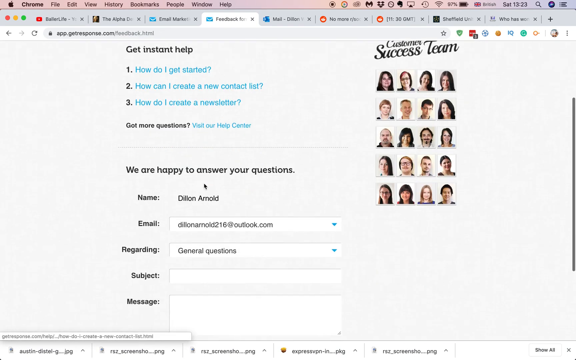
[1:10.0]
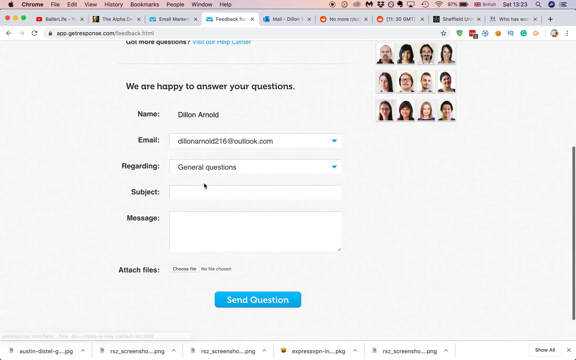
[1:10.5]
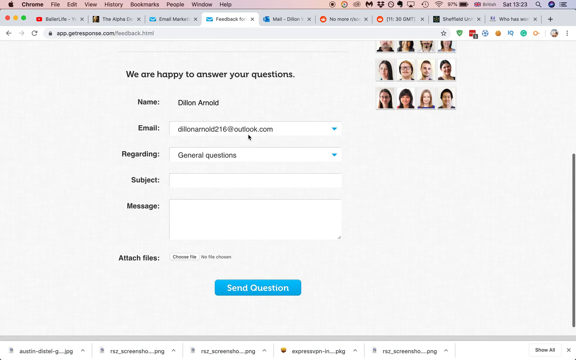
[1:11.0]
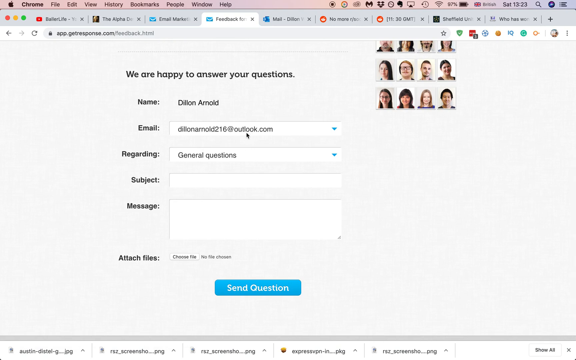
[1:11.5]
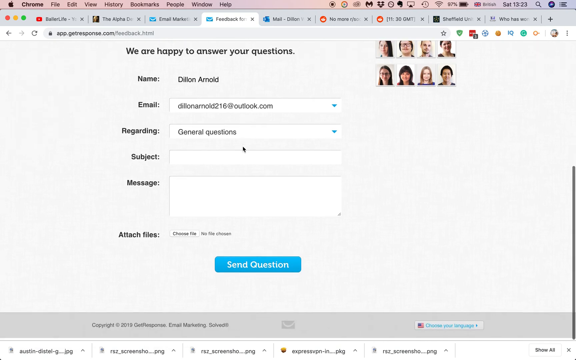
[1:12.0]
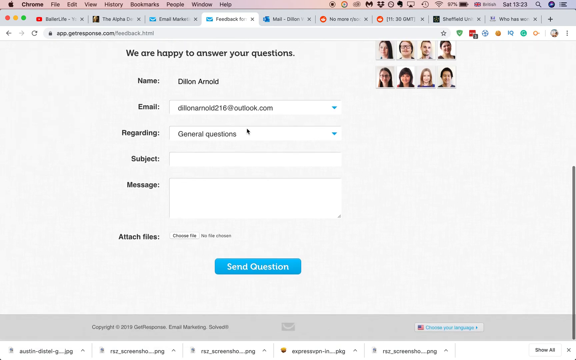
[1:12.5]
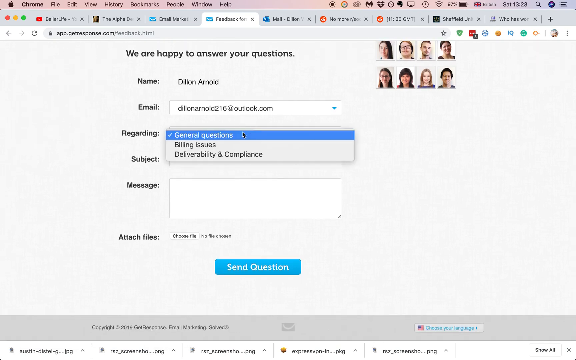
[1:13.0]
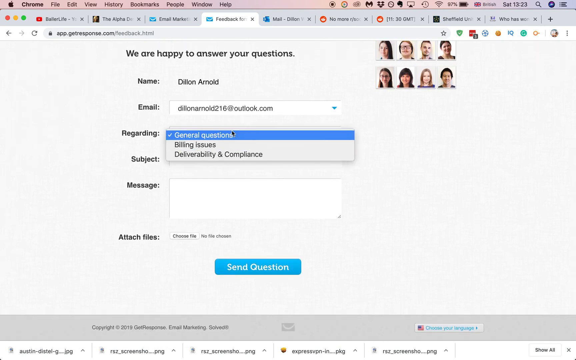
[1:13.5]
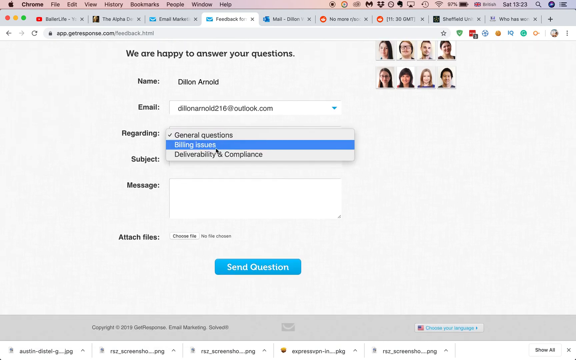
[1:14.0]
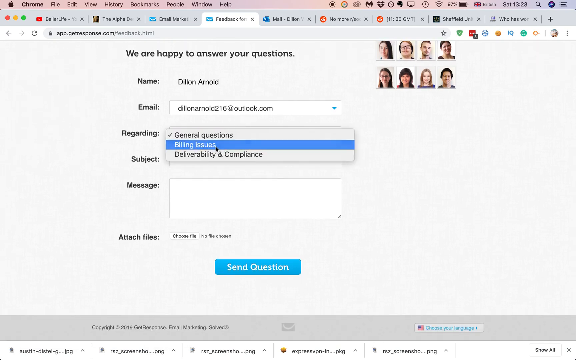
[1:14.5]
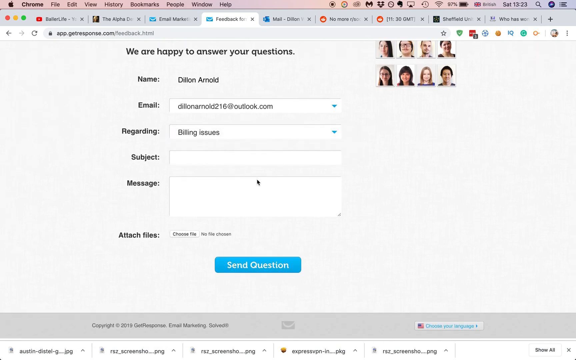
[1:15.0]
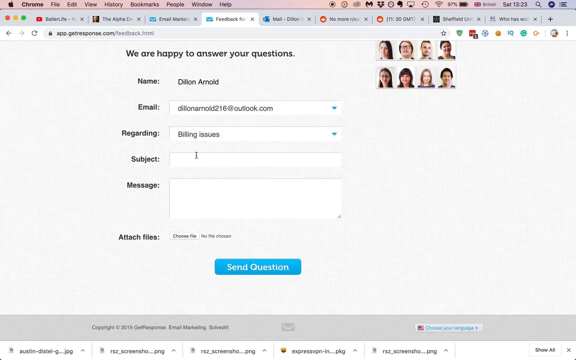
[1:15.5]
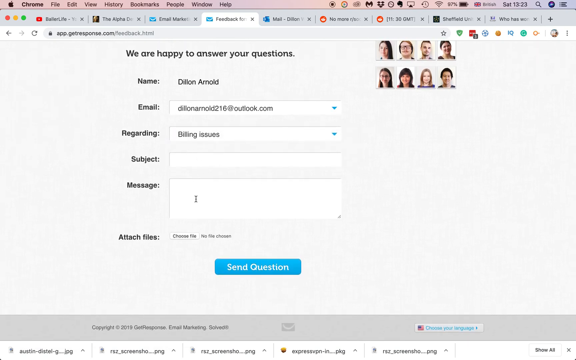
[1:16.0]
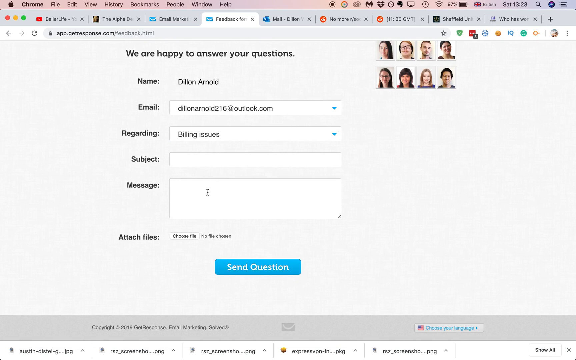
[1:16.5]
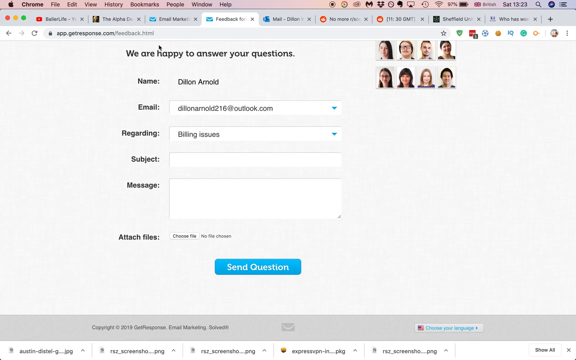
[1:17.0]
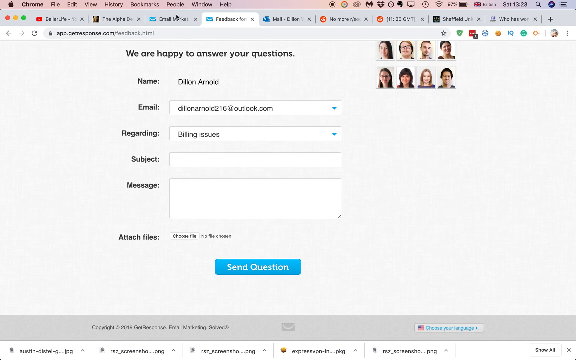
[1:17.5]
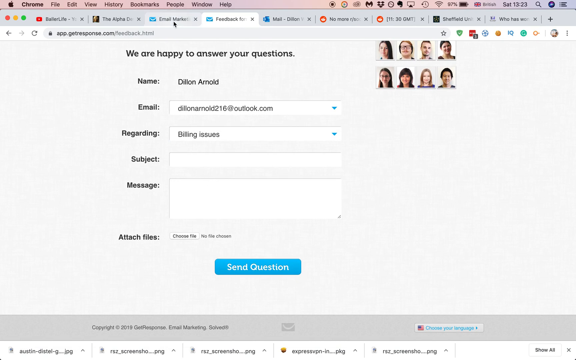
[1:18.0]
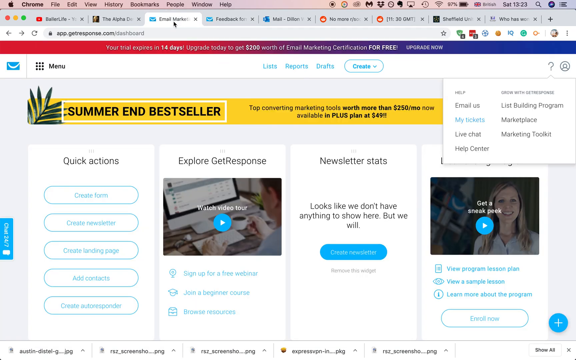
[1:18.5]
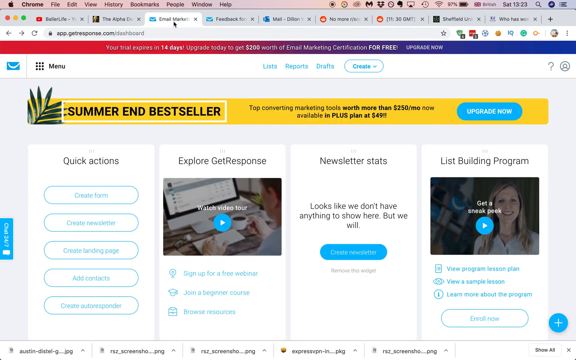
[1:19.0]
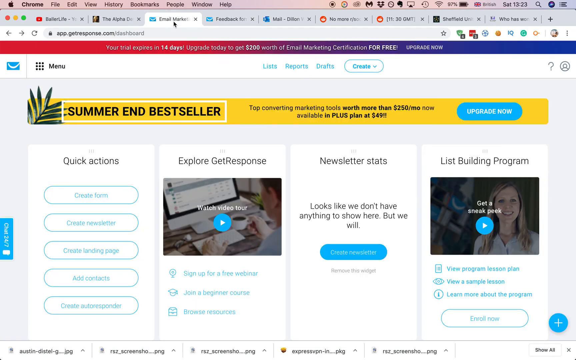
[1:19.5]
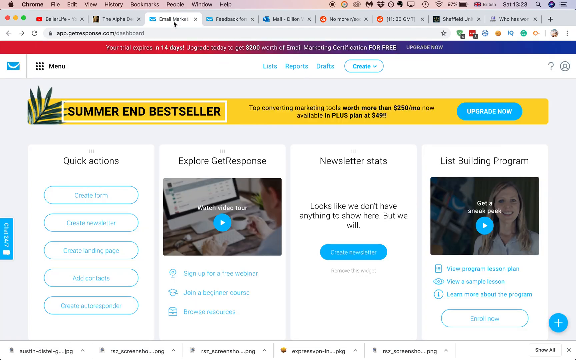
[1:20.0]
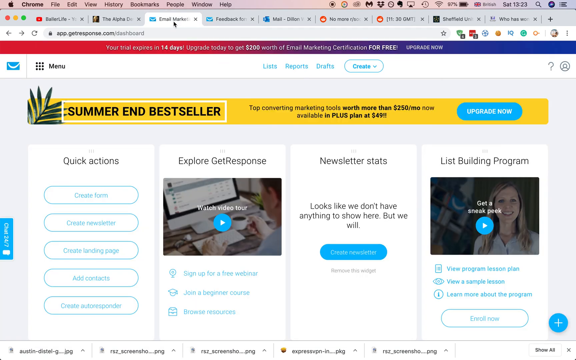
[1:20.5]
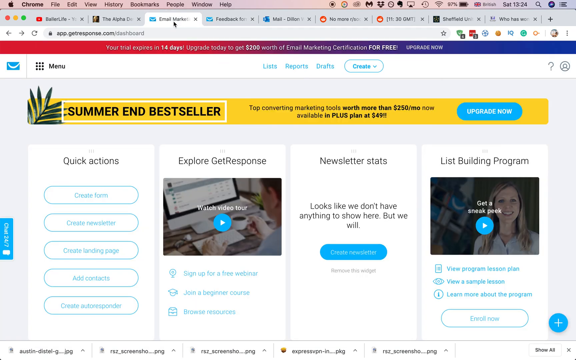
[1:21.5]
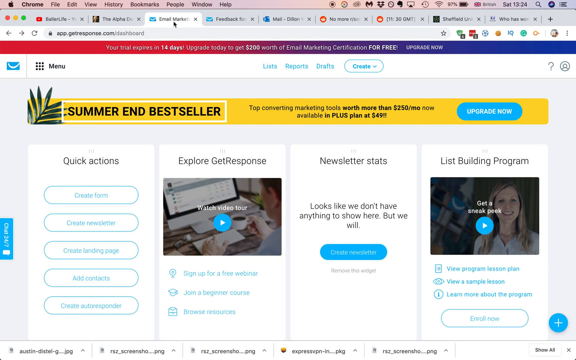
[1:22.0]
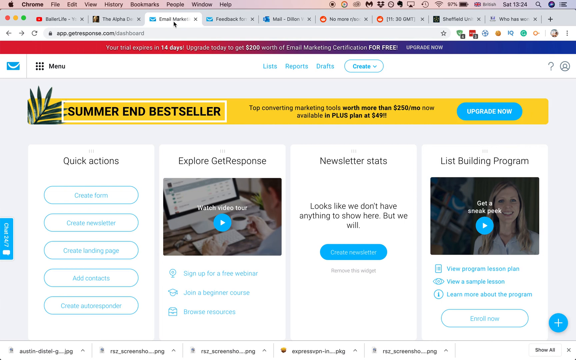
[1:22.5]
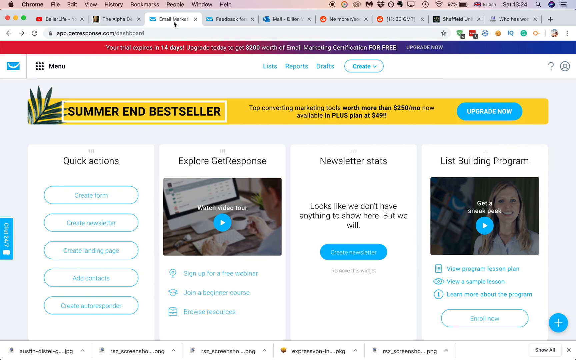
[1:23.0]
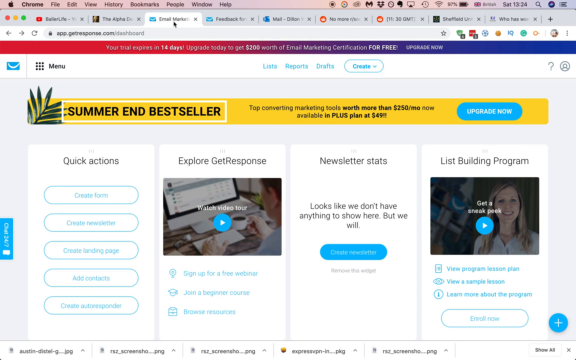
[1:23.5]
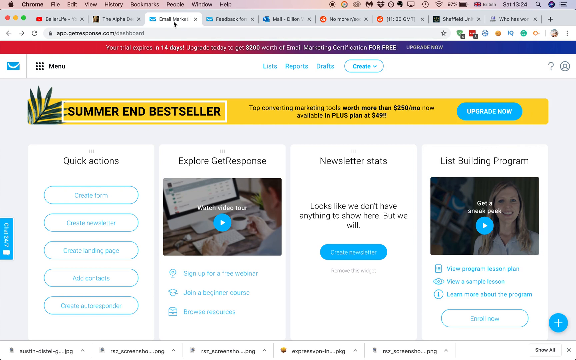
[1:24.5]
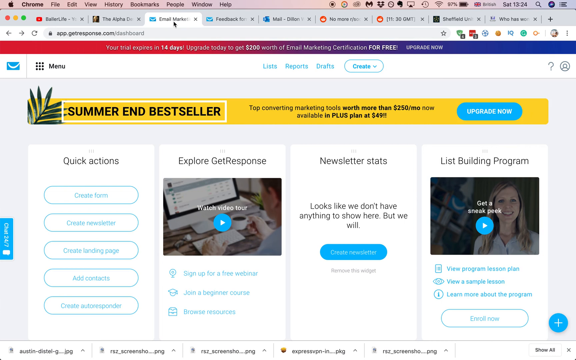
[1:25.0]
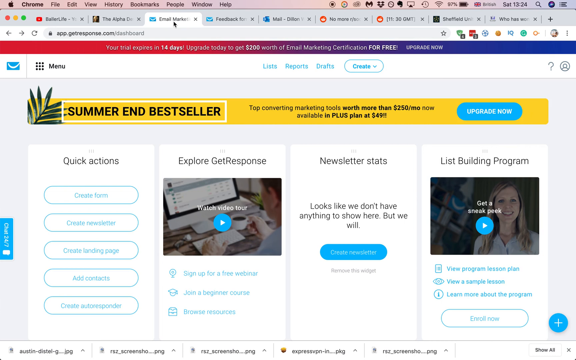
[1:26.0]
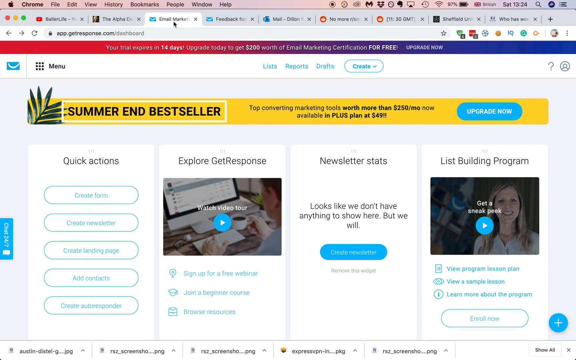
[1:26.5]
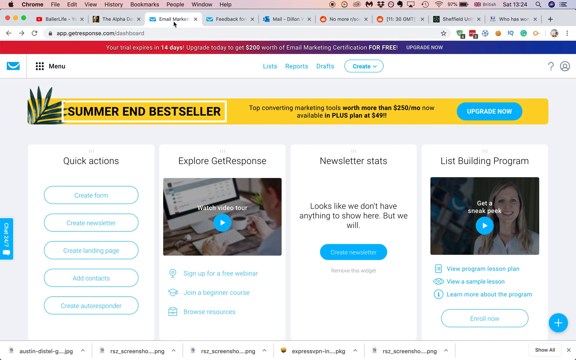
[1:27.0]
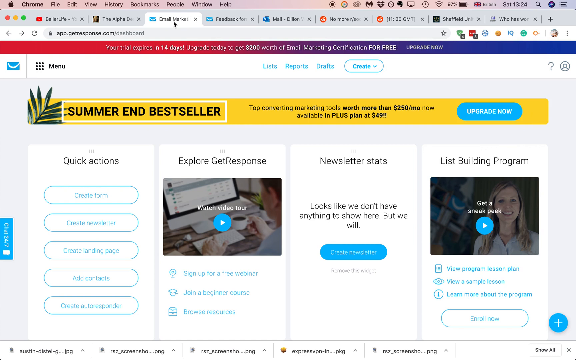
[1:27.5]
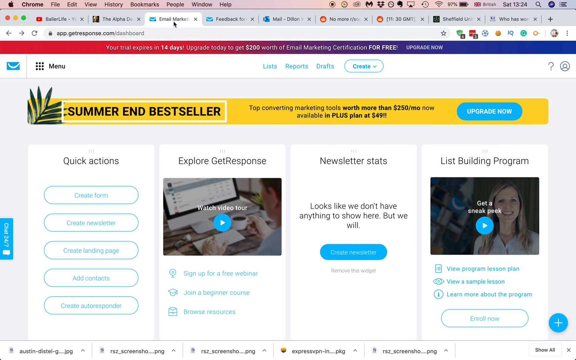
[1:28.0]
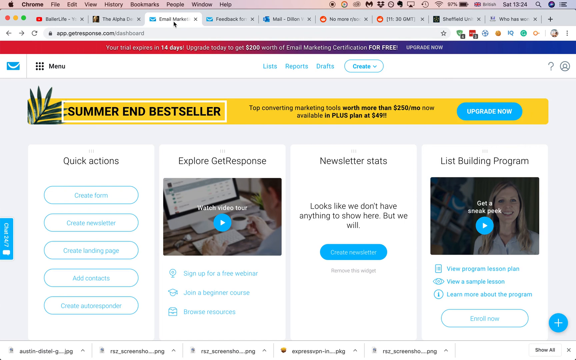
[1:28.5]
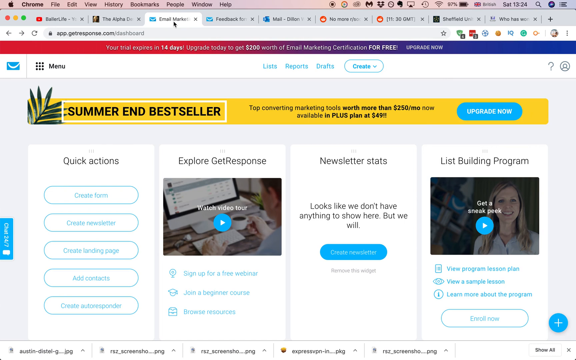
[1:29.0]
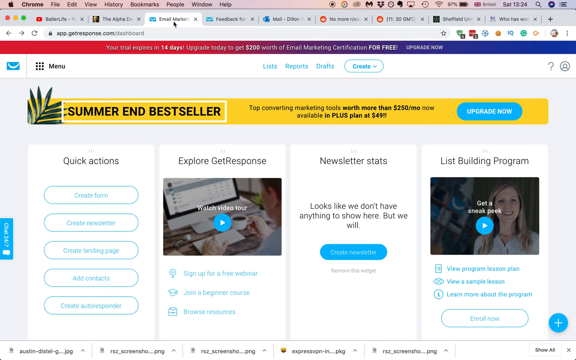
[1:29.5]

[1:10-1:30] A section says "we're happy to answer your questions". Under it, the user's name is visible next to "Name:". There are labeled word boxes: "Email:" with the user's email to the right of it; under that, "Regarding:" with an expandable box labeled "General Questions", which seems to offer a multitude of options; under that, "Subject:" with an empty word box to the right for typing the subject; below that, a "Message:" section with a larger fillable word box to its right; and finally "Attach files:" with an option to attach files. The user scrolls down very slightly, hovers over the "Regarding" box and expands it, clicks "billing issues", then collapses the box. The user moves to the subject text box, hovering over it briefly, then navigates back to the previous tab with the original page.